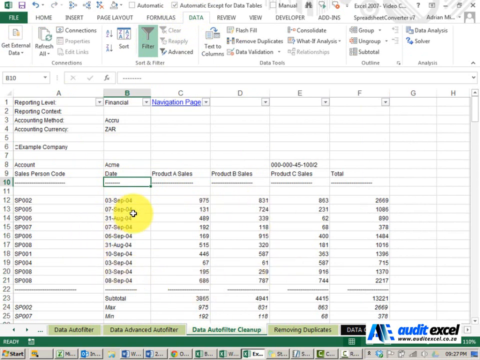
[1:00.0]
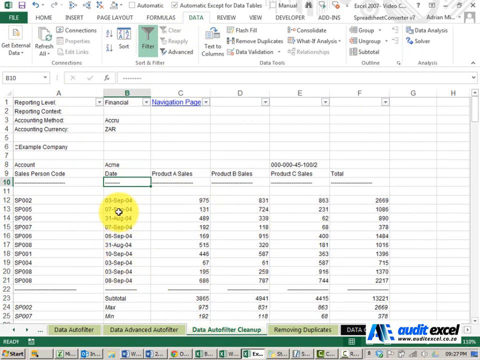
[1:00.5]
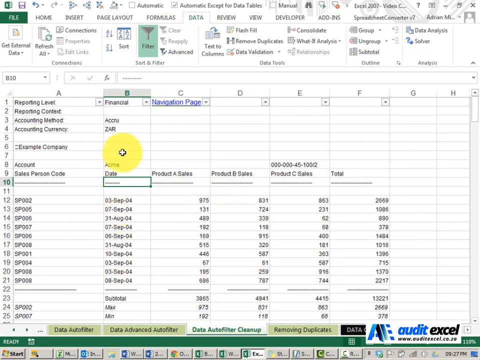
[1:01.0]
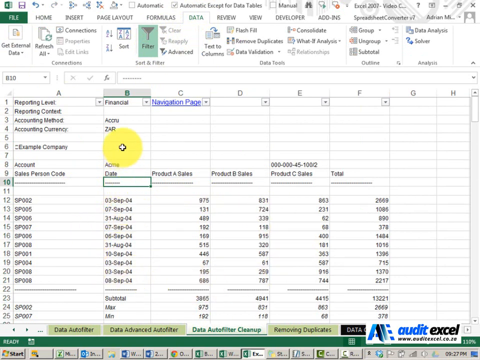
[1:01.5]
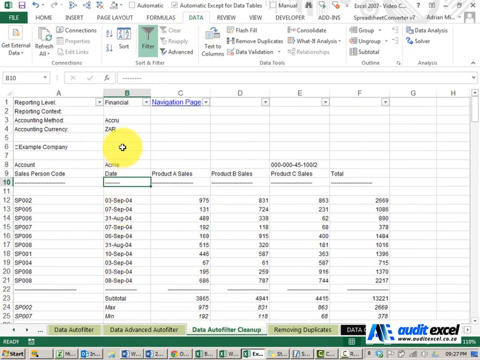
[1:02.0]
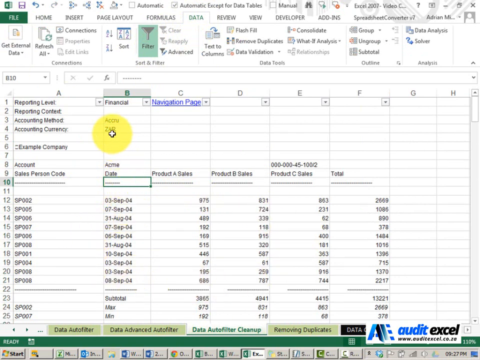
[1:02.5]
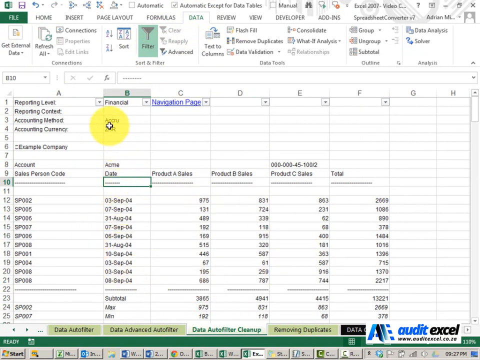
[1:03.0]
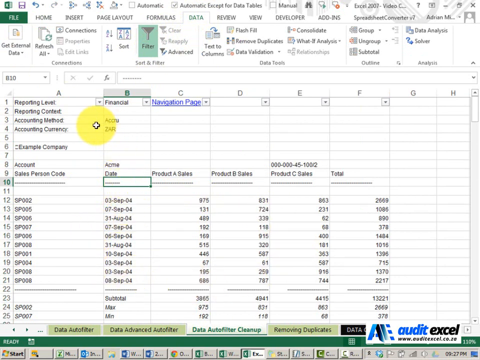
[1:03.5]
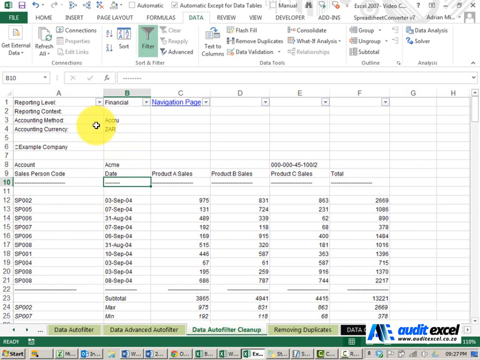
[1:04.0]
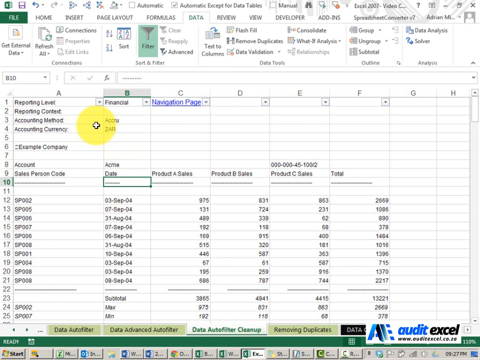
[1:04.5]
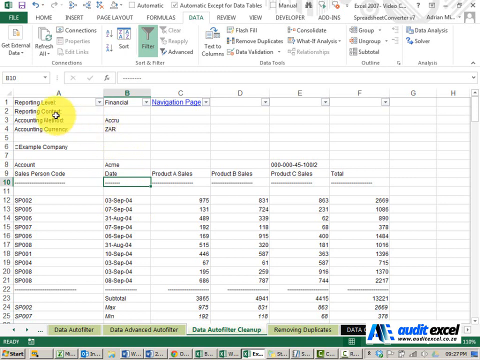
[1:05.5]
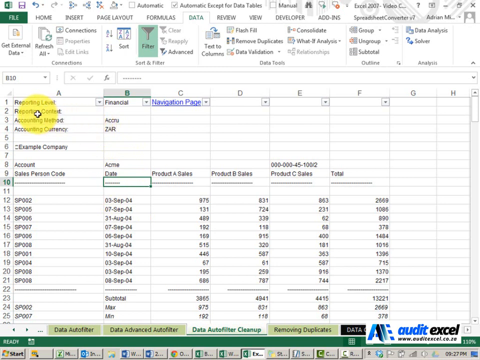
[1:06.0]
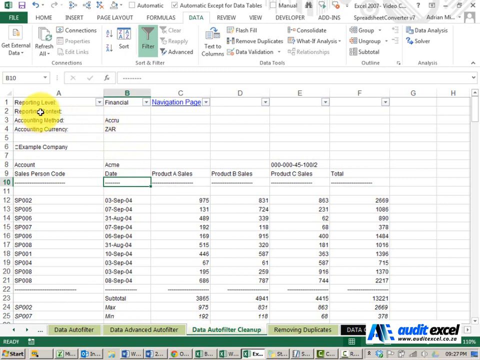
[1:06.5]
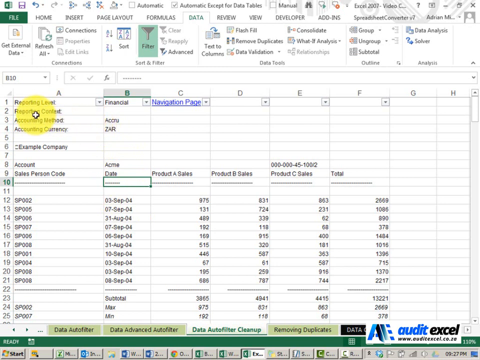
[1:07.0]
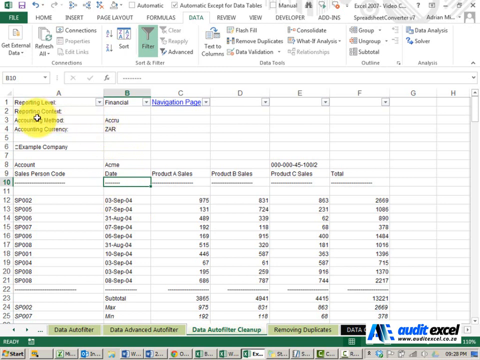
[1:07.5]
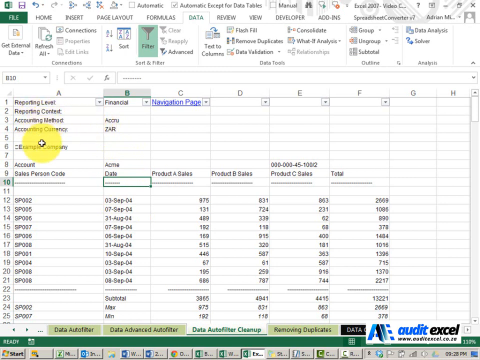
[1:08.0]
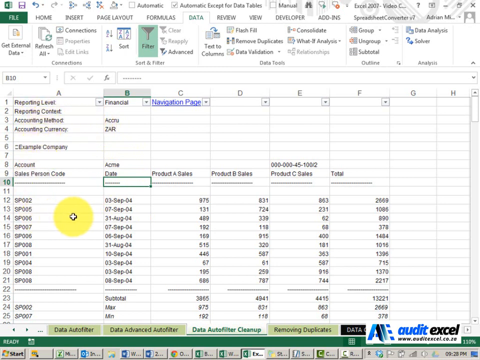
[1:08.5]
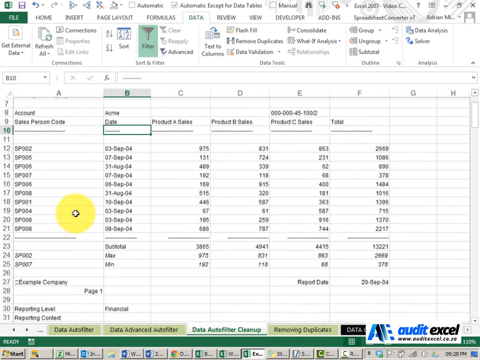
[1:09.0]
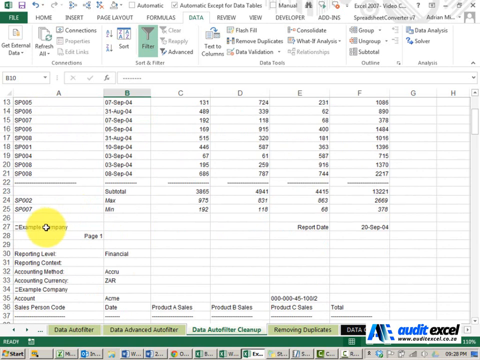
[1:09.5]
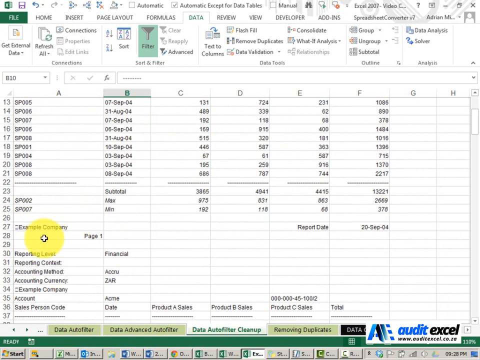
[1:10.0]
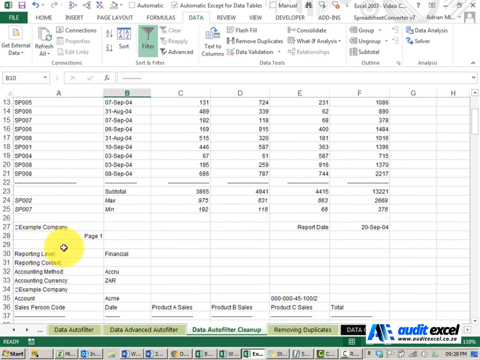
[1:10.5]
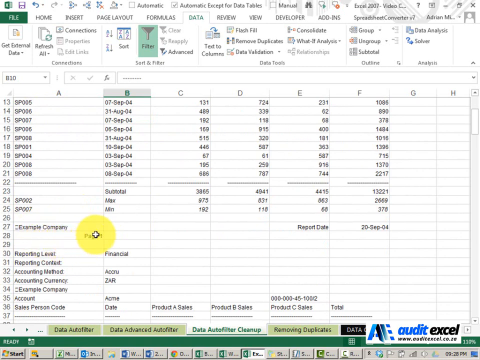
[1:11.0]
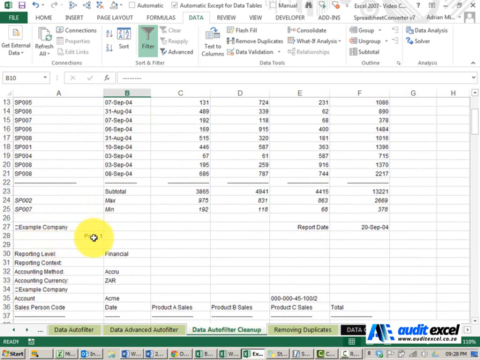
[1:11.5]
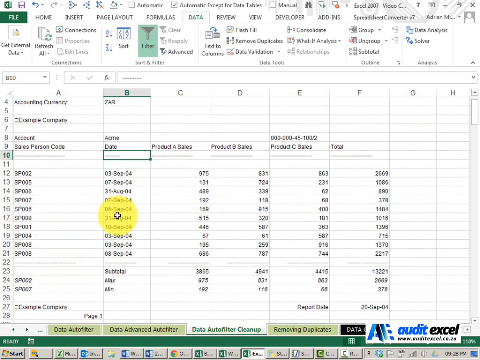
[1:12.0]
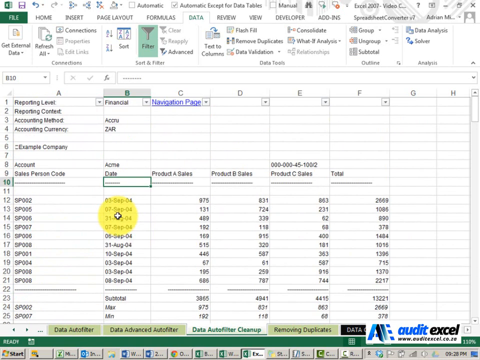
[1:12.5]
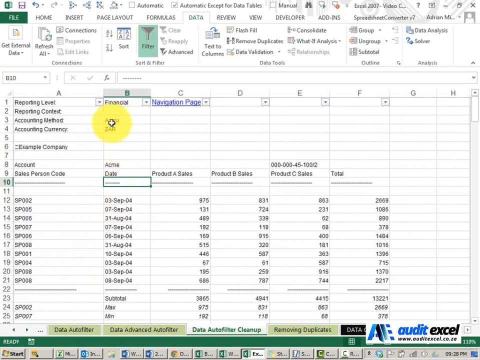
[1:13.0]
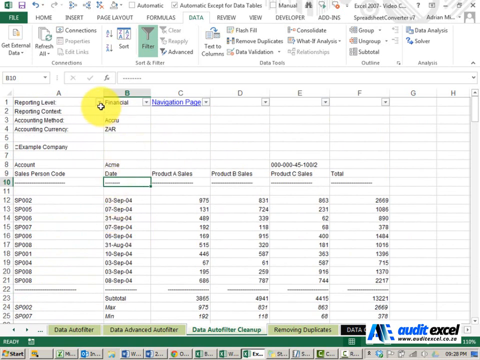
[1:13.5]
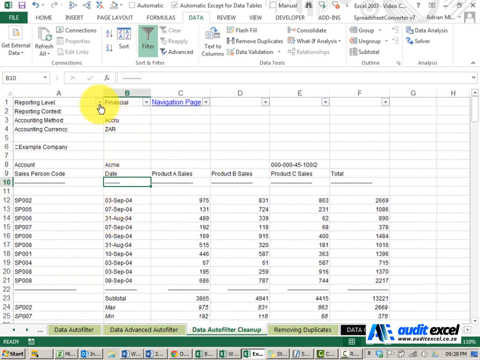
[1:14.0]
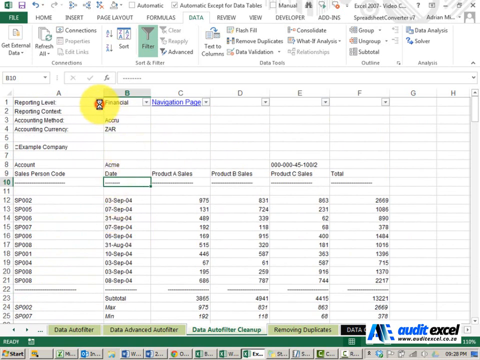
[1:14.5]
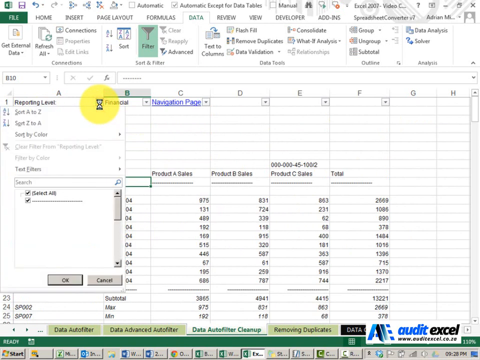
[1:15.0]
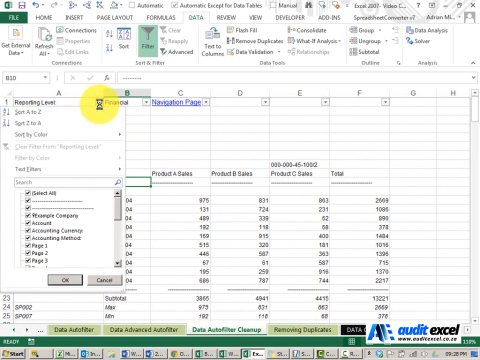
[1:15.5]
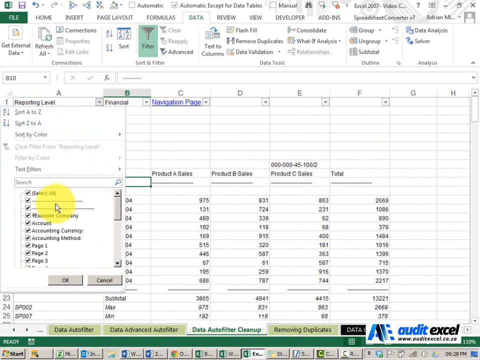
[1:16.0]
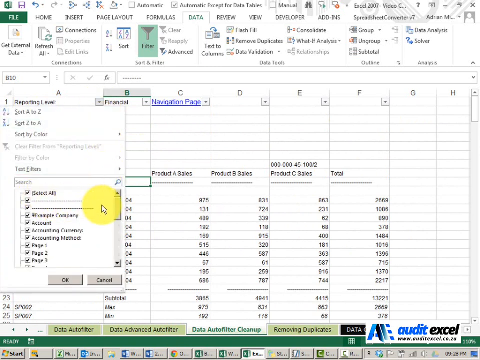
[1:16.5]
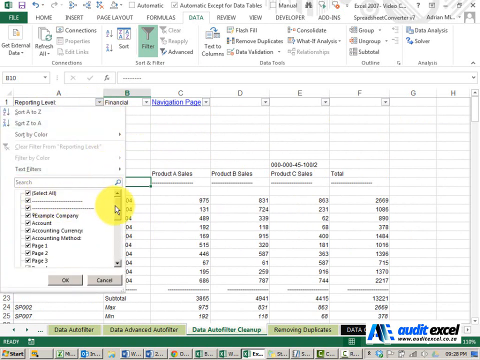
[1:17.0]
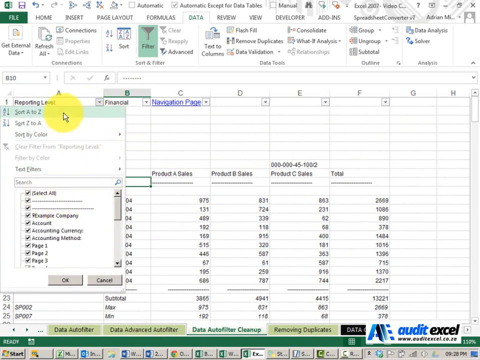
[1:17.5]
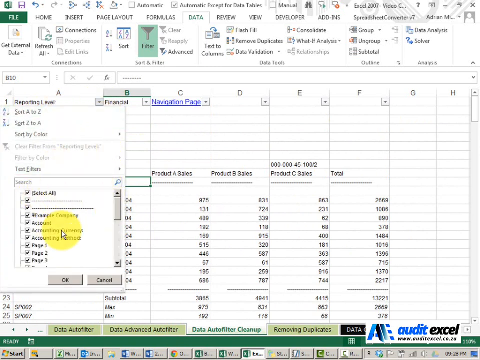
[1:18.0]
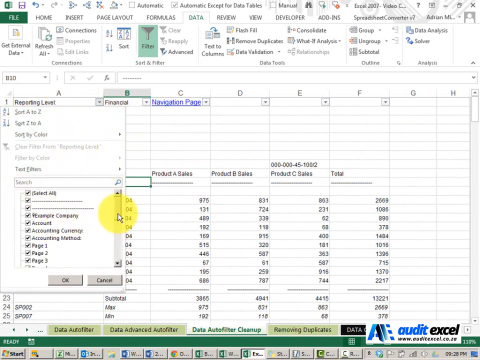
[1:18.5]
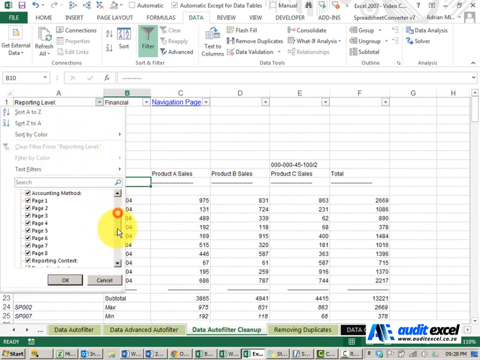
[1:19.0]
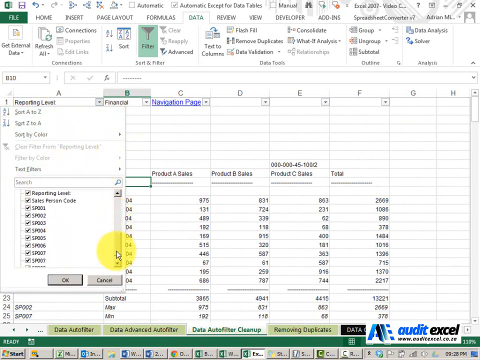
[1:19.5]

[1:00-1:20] Back in the audit document, the cursor is on reporting content, which is highlighted. Example company, page one and financial are visible. A dropdown opens in the A column, reporting level, showing a list of highlighted items: select all, example company, account, accounting currency, accounting method, page one, page two, page three. Scrolling down the list shows items through page 8, then reporting content, reporting level, salesperson, code, and all of the individual salespeople, all of them selected.